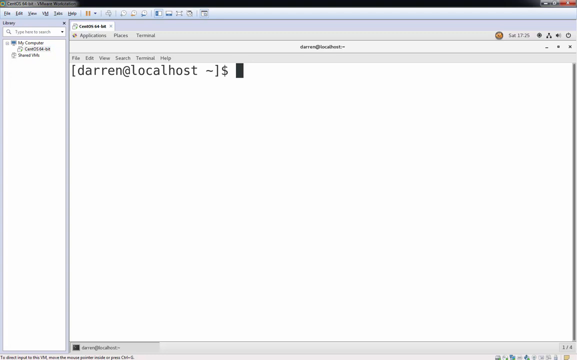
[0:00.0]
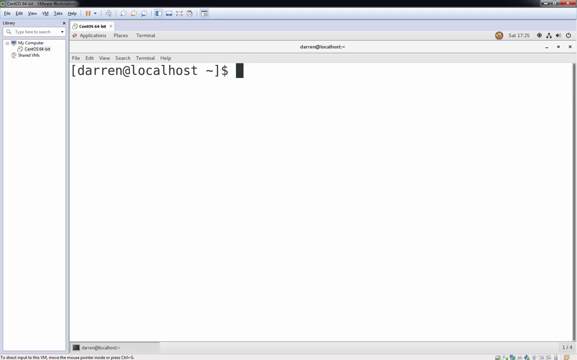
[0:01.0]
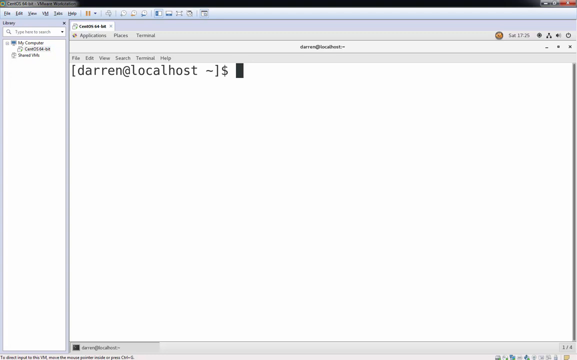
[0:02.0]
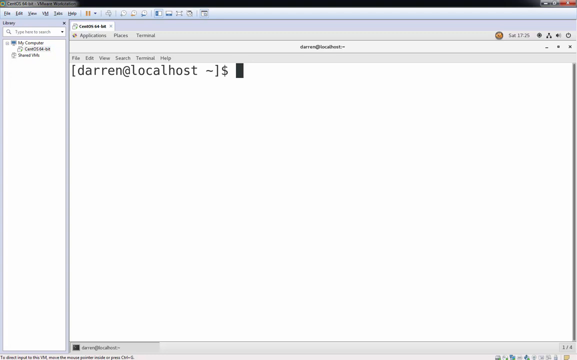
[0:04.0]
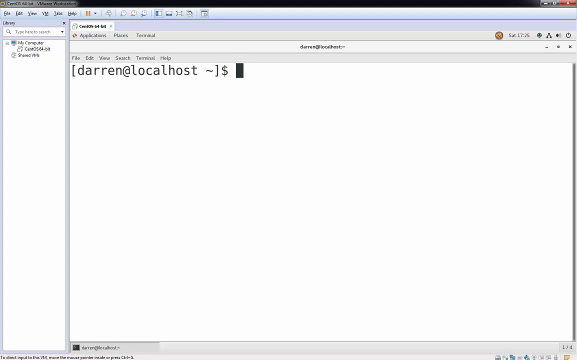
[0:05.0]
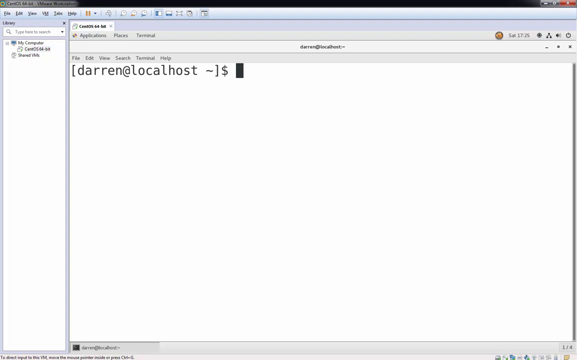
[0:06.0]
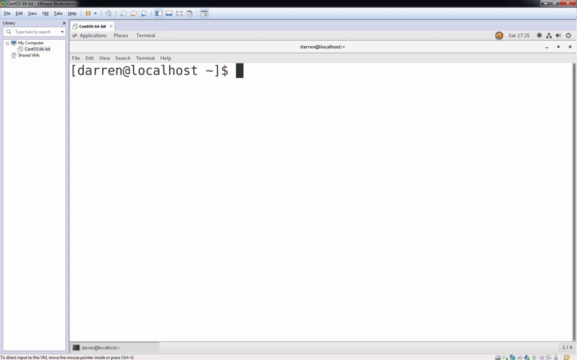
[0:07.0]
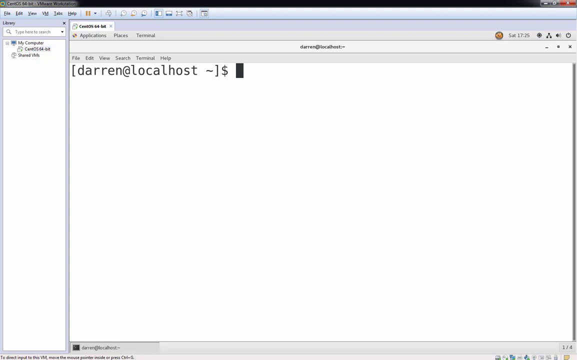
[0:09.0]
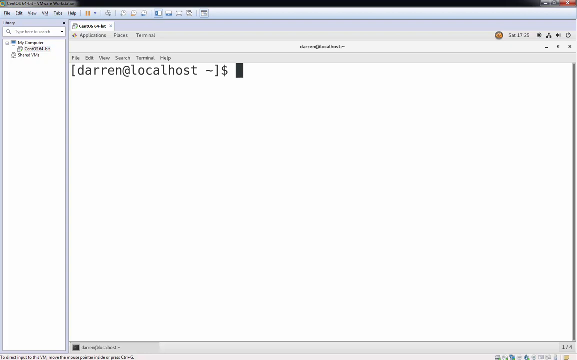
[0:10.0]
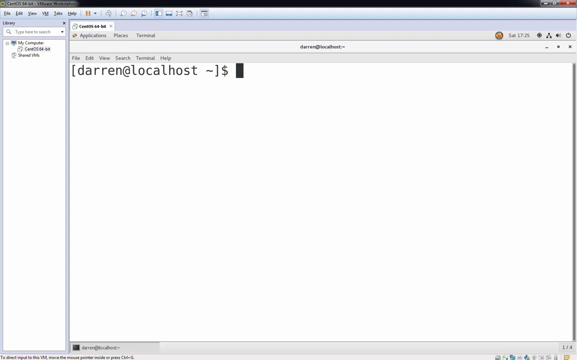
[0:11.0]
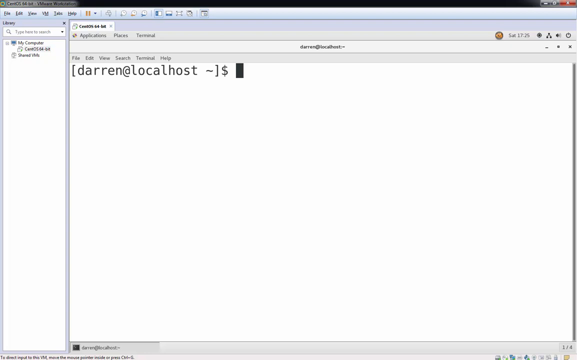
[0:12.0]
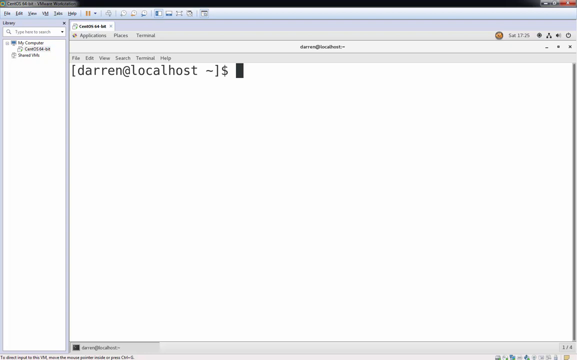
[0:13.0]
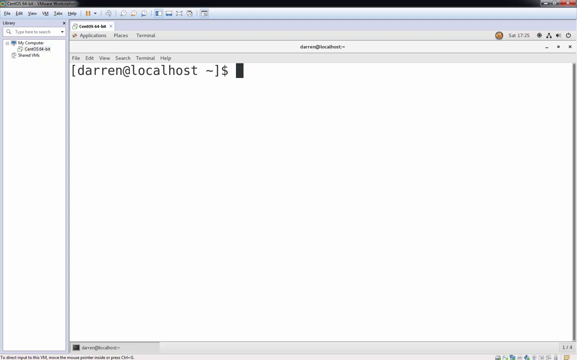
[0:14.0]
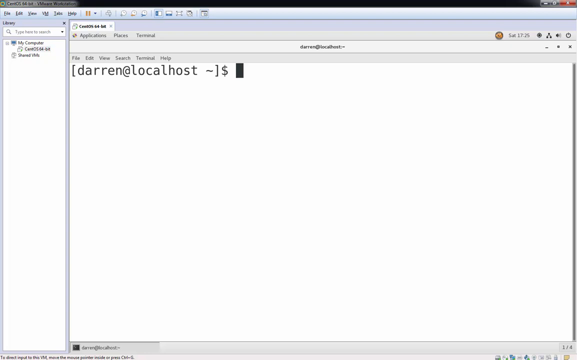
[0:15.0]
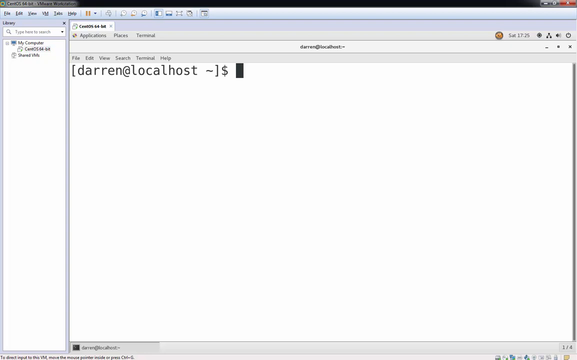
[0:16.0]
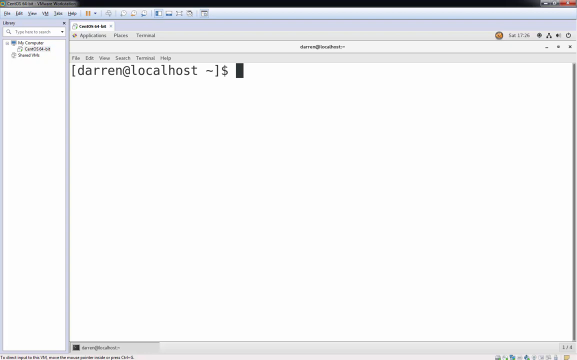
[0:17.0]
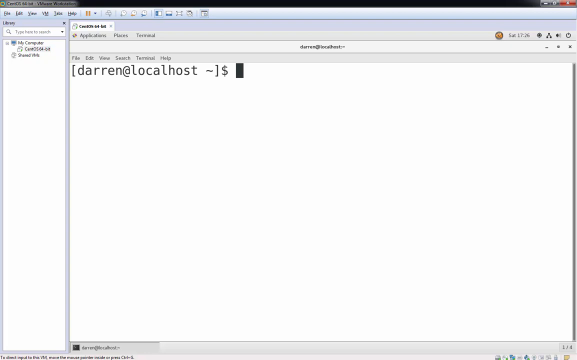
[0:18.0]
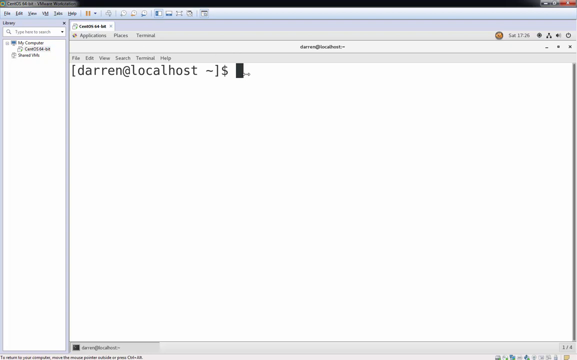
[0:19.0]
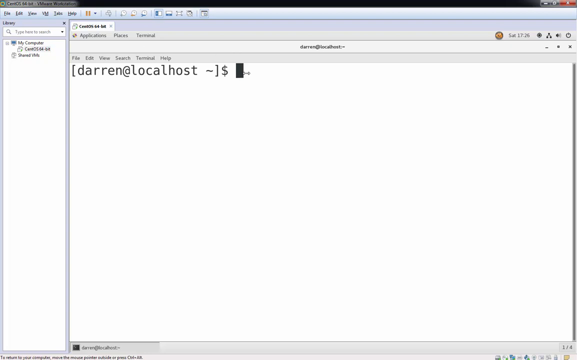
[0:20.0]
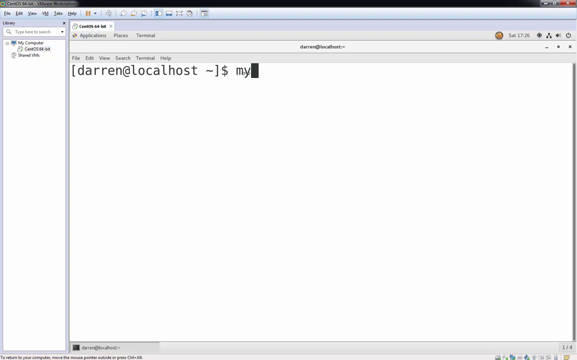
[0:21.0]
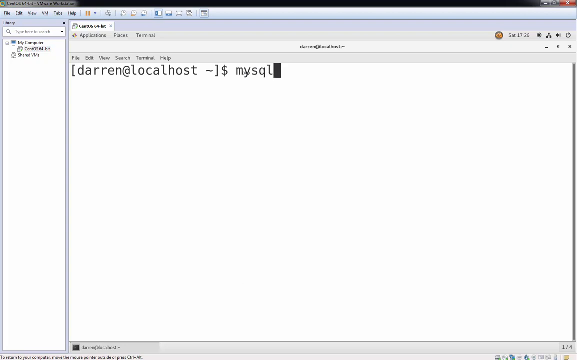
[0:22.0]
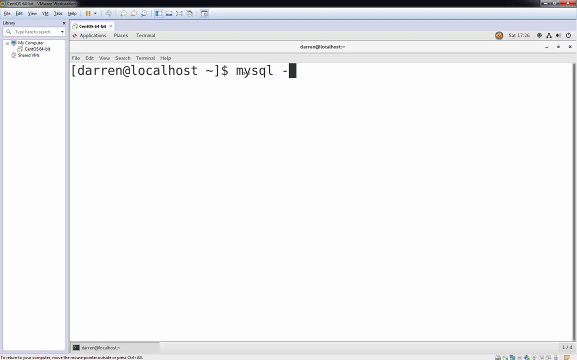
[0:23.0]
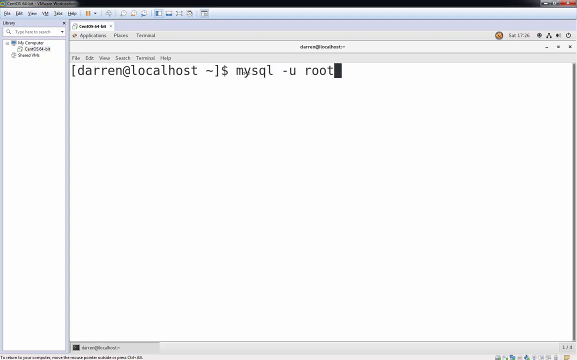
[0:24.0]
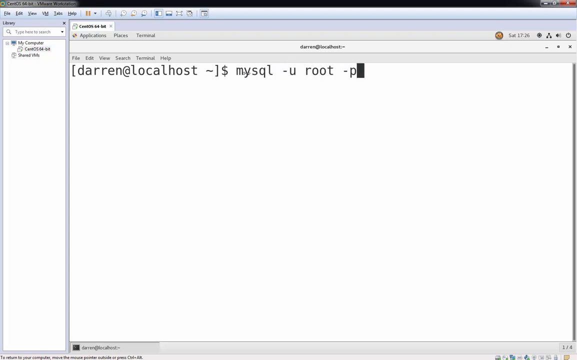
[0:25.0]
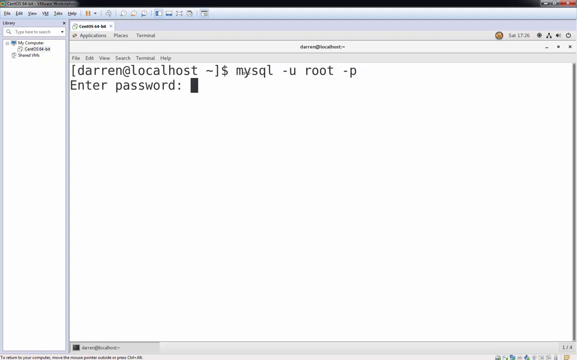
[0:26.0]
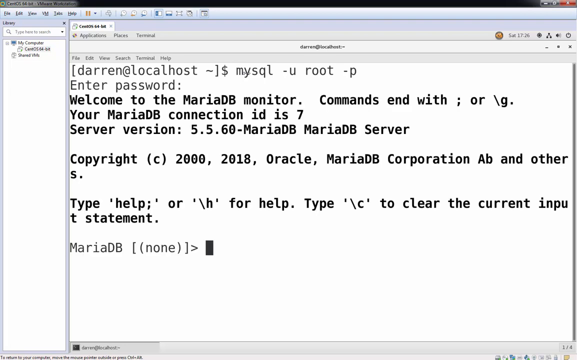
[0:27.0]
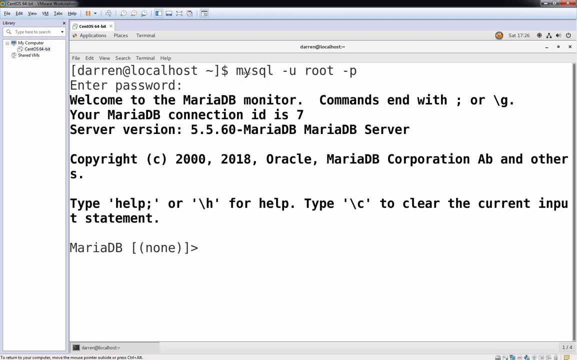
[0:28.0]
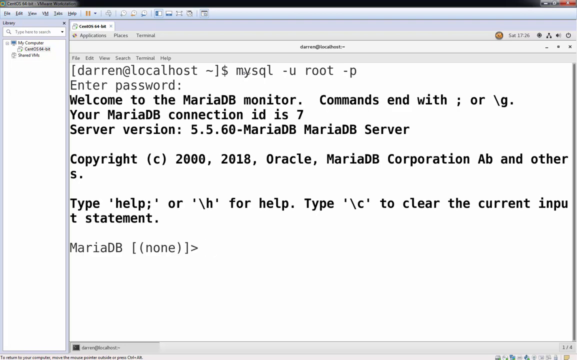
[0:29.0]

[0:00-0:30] A computer program appears on screen; its name is too blurry to read. A toolbar at the top reads "File, Edit, View, VMI, Tabs, Help." On the left is a library section with a search bar reading "Type here for search," followed by "My Computer" with two unreadable files underneath it. On the right is what looks like an open notepad-type window. At its top is a bar reading "Application Places Terminal," followed by what may be "Darren at Localhost." On the right of that toolbar, the time reads "SAT 1726," alongside other icons: a share icon, a few circles and a power icon. Below is a menu reading "File, Edit, View, Search, Terminal, Help." In the blank text area is a line starting with a bracket, "Darren at Localhost," a squiggly line, another bracket and a dollar sign, then "mysql-uroot-p" and "enter password:". Next comes text reading "welcome to the MariaDB monitor", "your MariaDB connection id is 7", "server version: 5.5.60-MariaDB MariaDB server", "copyright (c) 2000 2018 oracle MariaDB corporation ab and others" and "type /c to clear the current input statement". It ends with a prompt reading "MariaDB" and "none" in brackets and parentheses, followed by a greater-than sign.